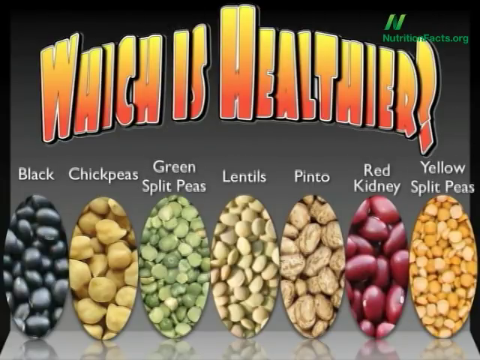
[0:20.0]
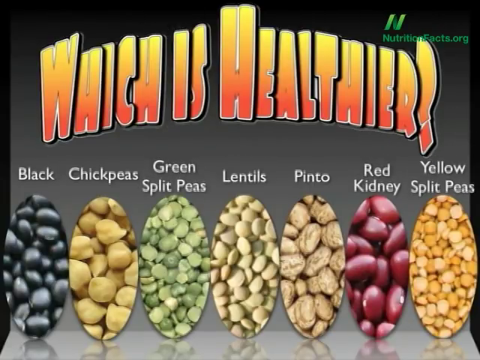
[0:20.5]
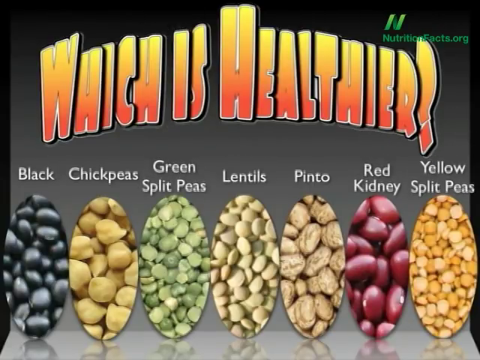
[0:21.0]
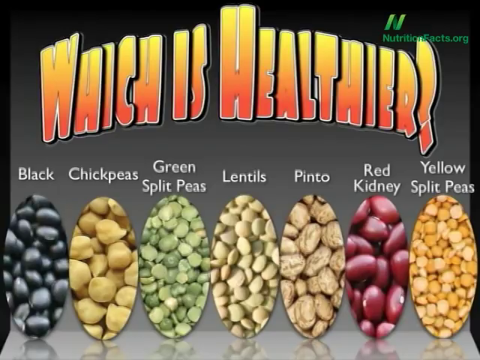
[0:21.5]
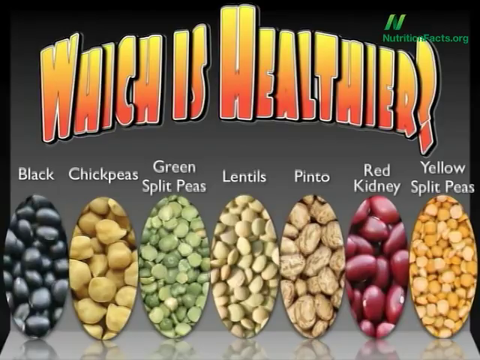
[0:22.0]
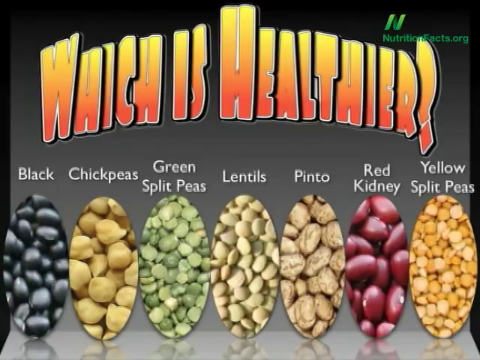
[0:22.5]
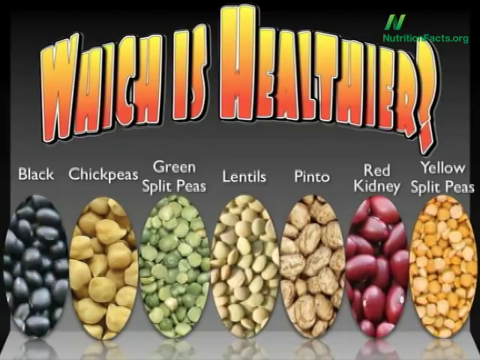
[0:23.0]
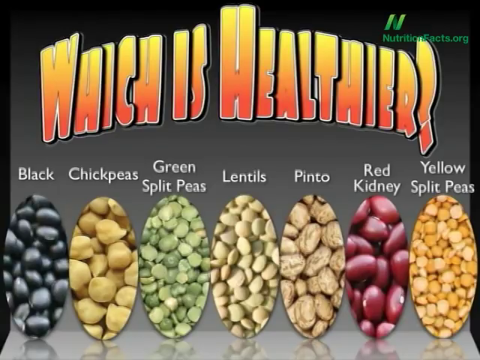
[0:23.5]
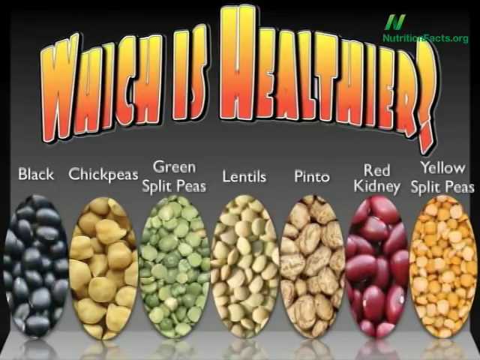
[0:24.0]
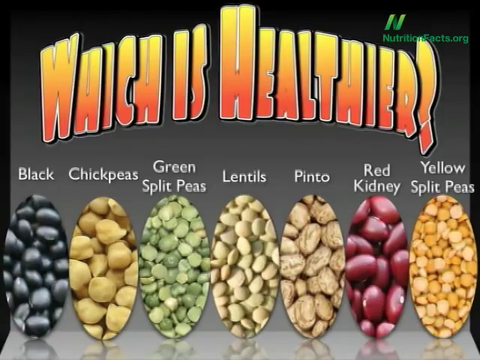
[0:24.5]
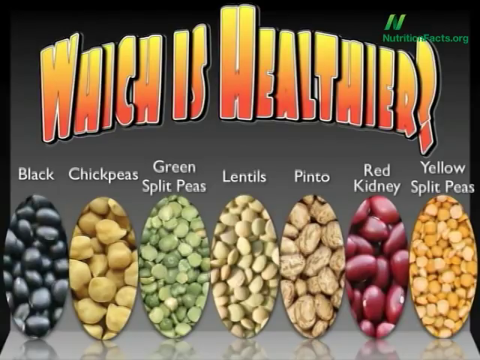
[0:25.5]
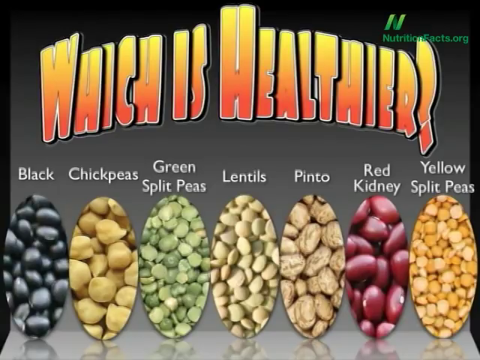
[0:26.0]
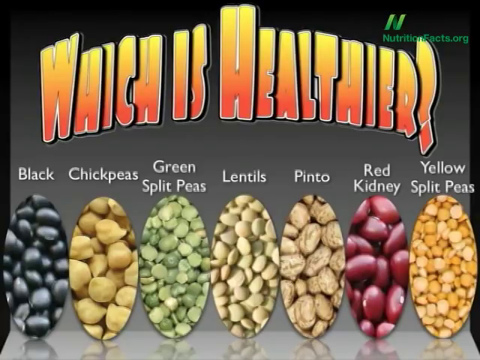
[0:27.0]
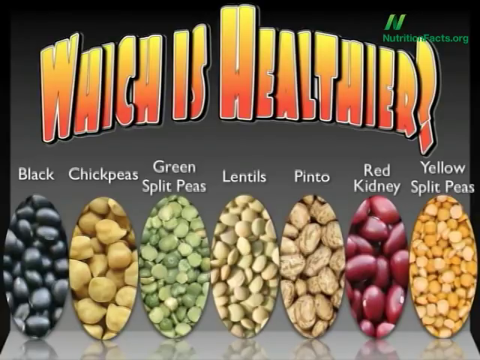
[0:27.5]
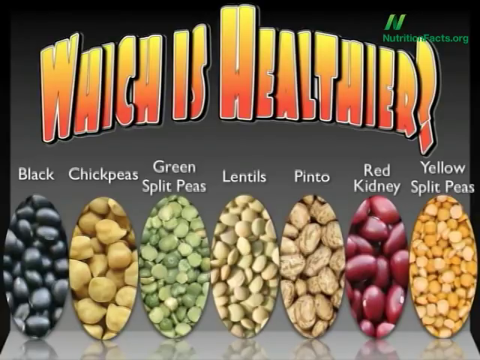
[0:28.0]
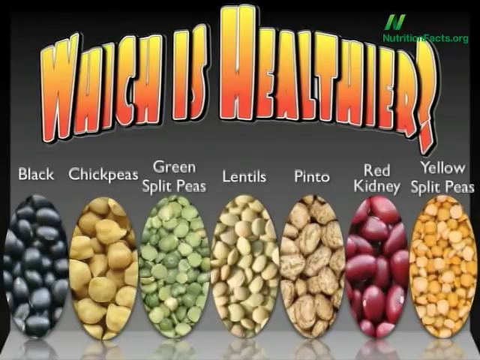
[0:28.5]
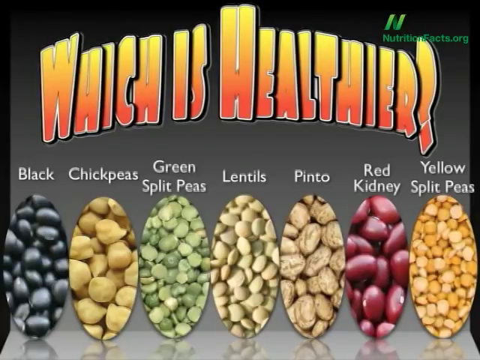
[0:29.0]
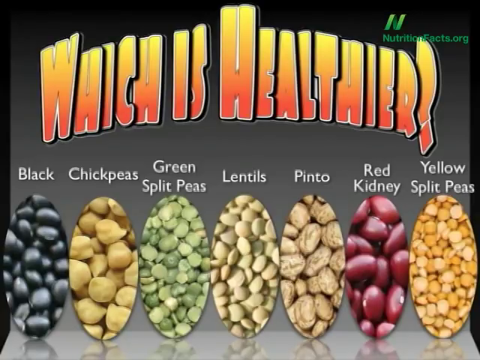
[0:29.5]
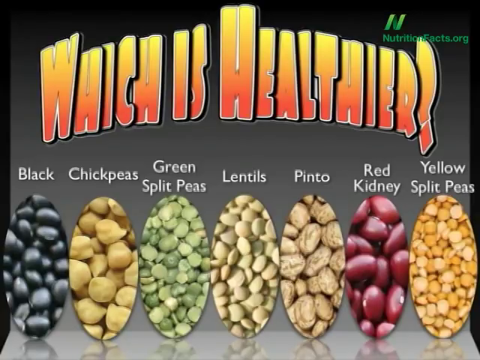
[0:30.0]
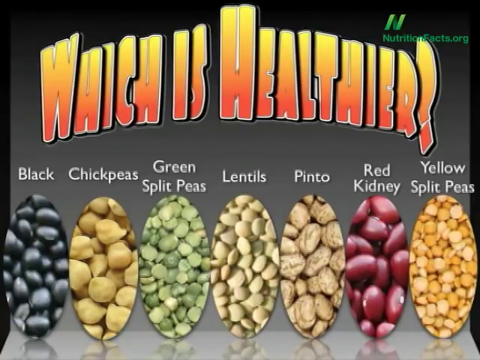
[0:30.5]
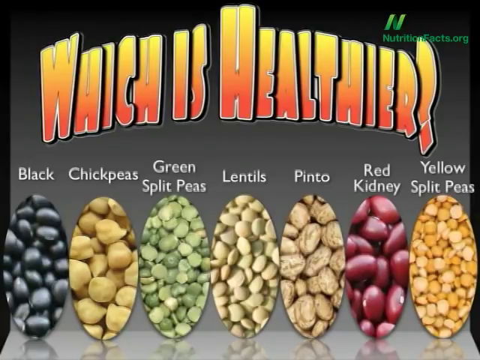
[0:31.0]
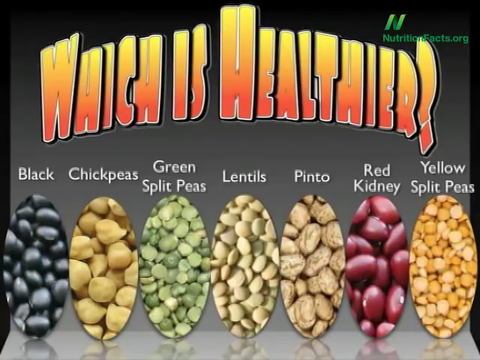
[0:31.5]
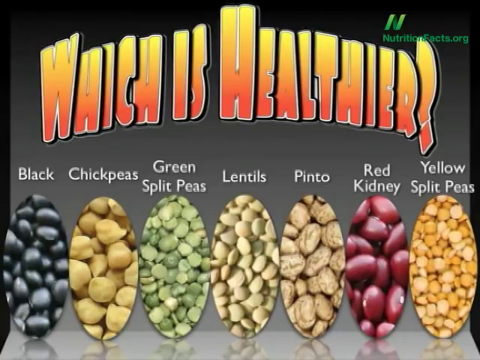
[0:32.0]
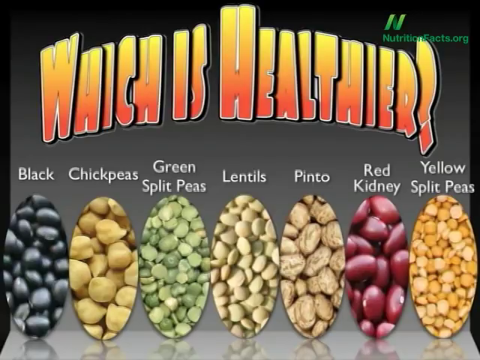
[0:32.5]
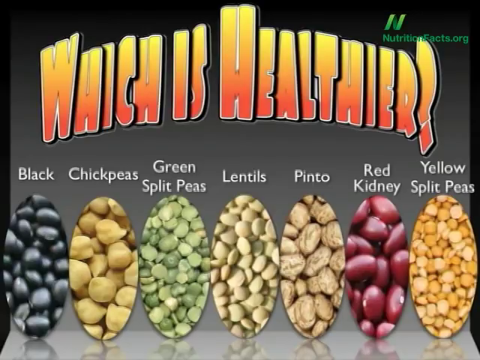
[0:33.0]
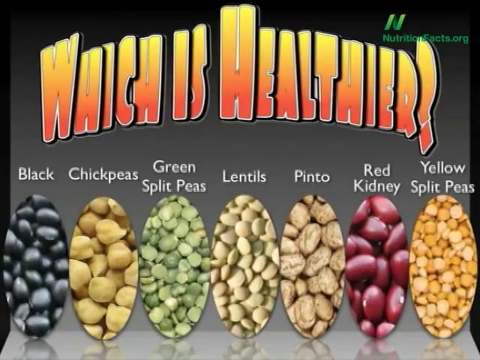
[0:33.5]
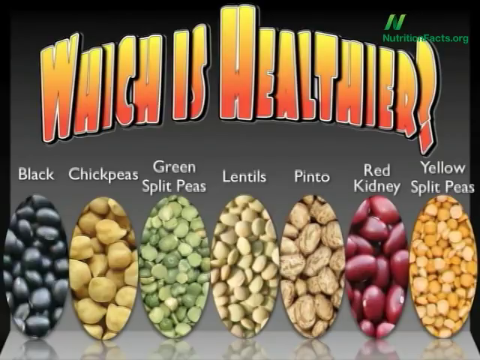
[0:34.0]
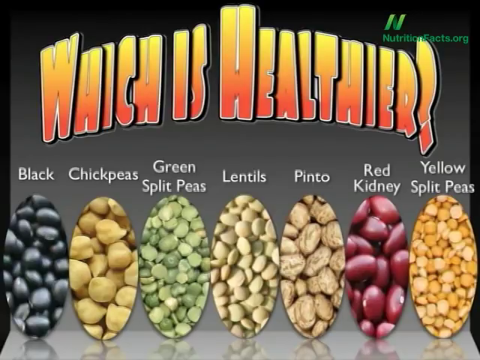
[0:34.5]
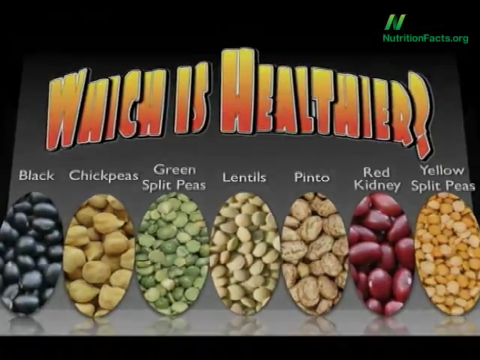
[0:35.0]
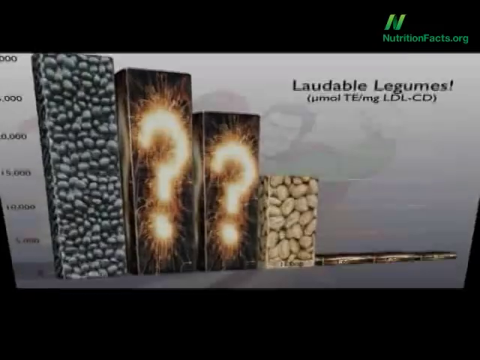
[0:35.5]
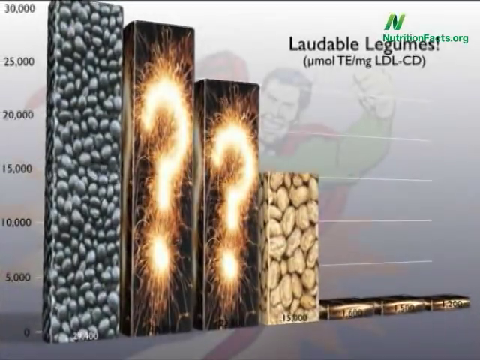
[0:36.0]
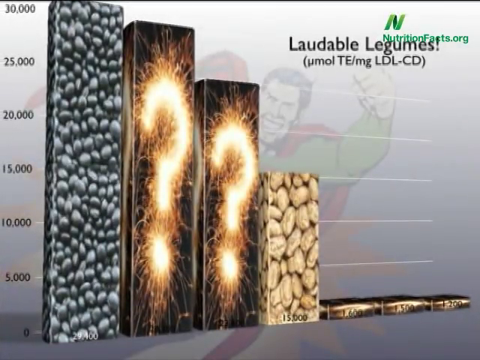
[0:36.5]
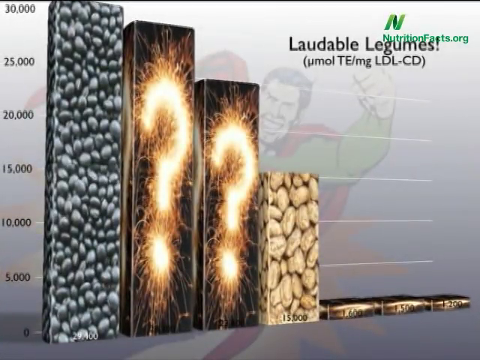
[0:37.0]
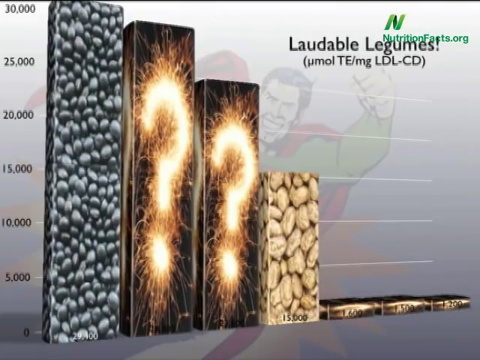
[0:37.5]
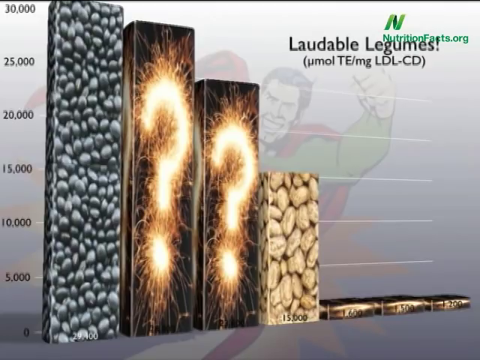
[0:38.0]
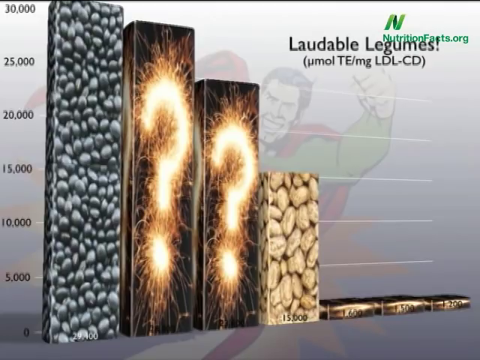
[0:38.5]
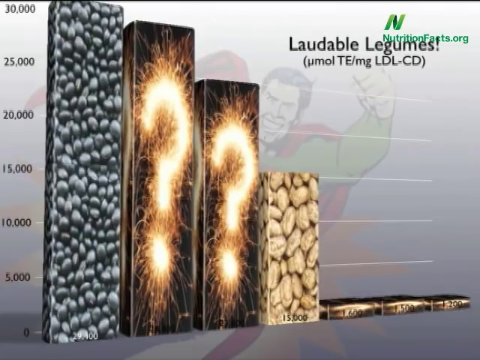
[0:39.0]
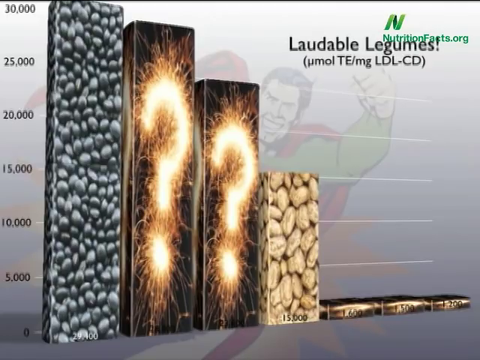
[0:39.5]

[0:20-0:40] The screen with the text "which is healthier" shows what looks like seven different types of beans, from left to right: black, chickpeas, green split peas, lentils, pinto, red kidney and yellow split peas. The screen stays static for some time with nothing in particular happening. The video then cuts to a chart with the text "Laudable Legumes" in the top right corner, just below the nutritionfacts.org logo. The chart has seven bars, and the y-axis is marked in steps of 5,000. Each bar apparently represents one type of bean from the list, with black on the left and yellow split peas on the extreme right. The first four bean types have the highest values, while the last three are below 5,000.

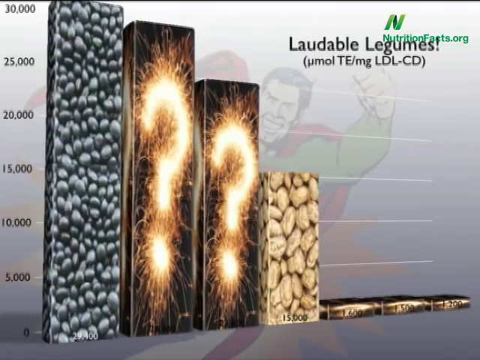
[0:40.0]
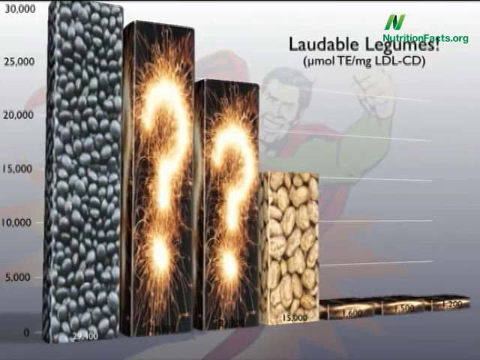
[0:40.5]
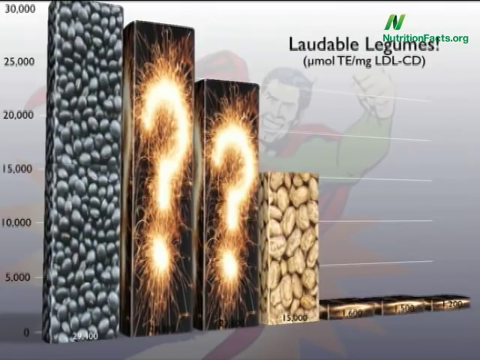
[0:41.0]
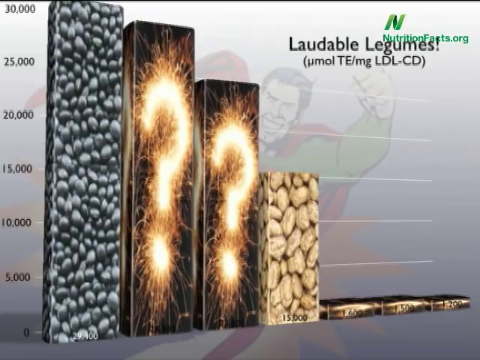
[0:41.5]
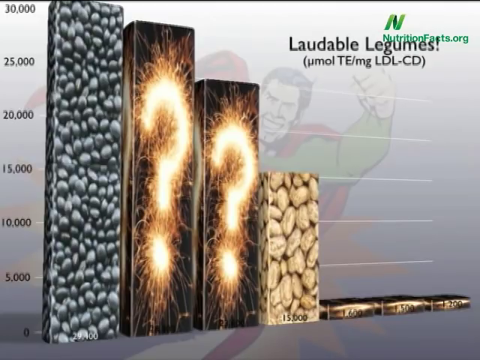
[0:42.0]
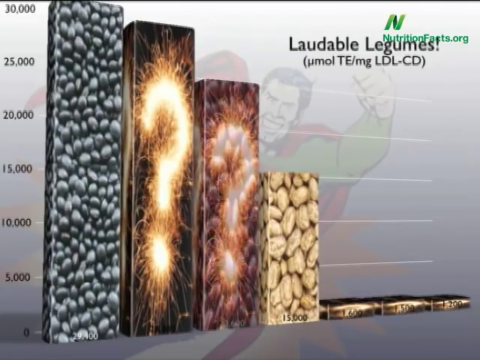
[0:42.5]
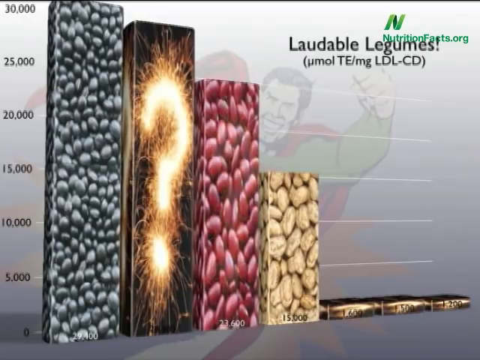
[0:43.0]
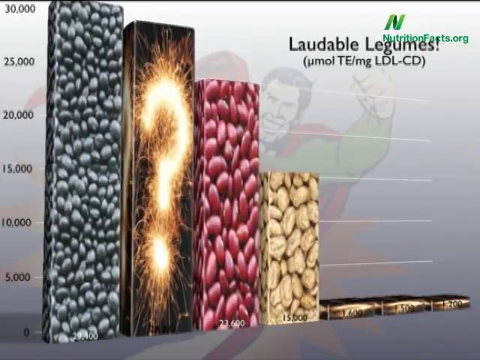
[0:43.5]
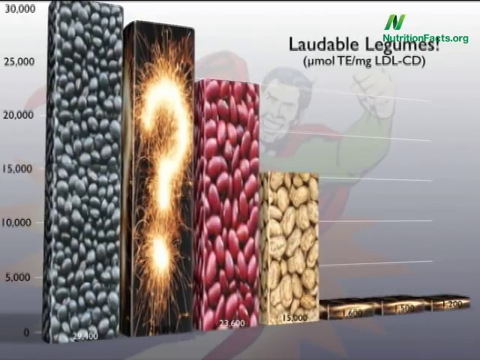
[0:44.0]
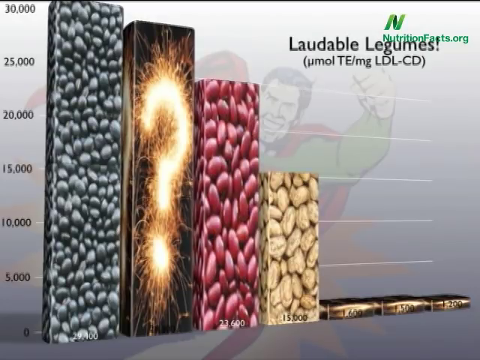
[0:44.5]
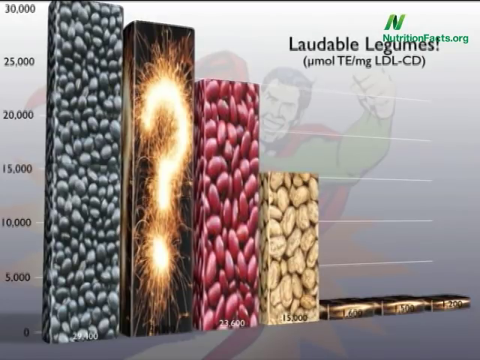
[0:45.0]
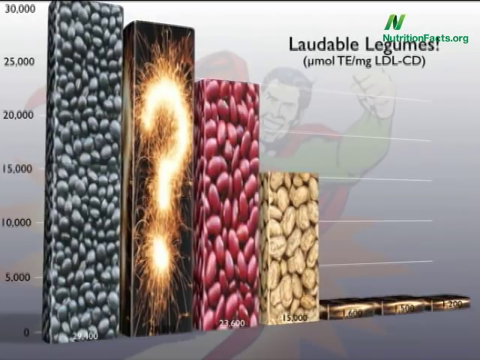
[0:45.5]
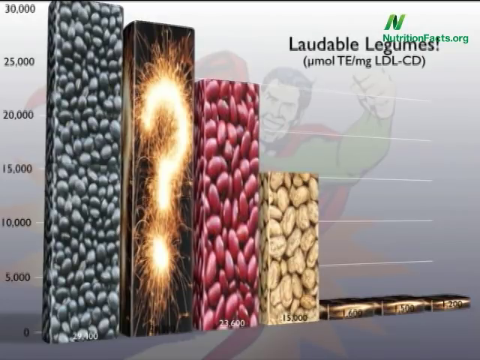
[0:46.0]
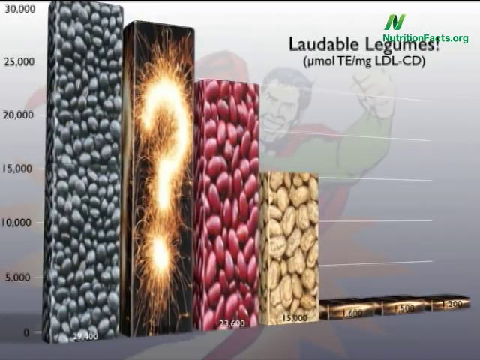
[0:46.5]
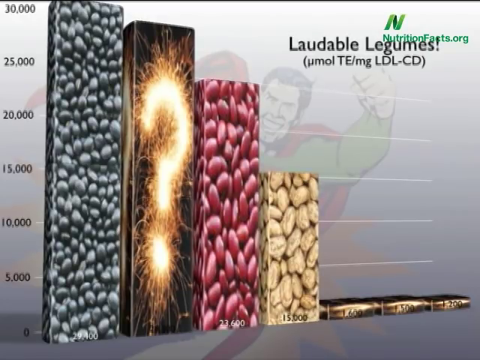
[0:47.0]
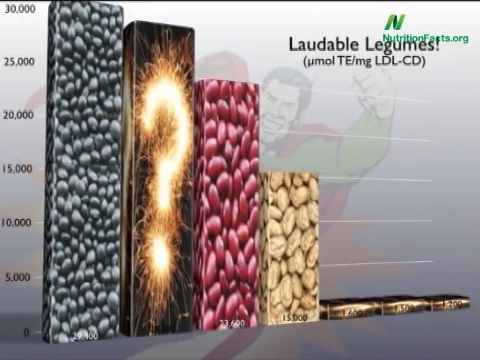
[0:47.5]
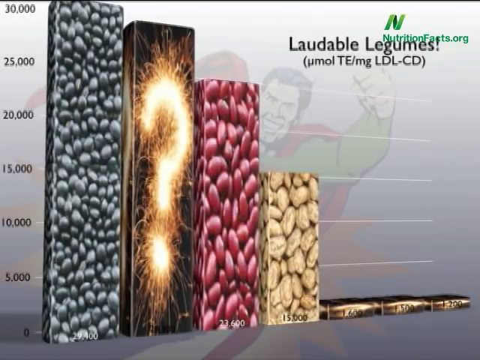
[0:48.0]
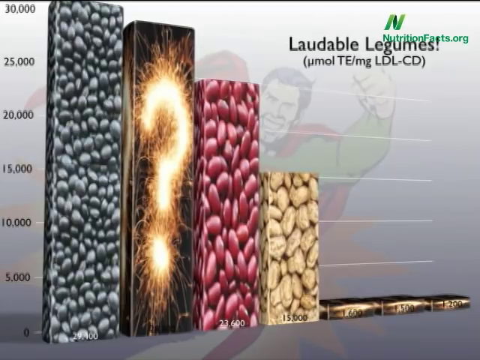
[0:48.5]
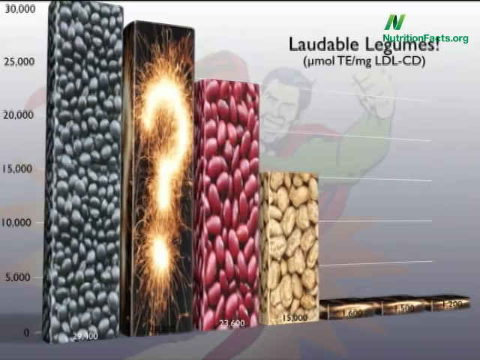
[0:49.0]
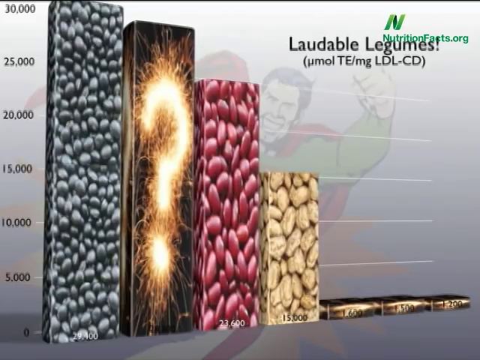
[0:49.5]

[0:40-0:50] A chart with the text "Laudable Legumes" is shown, with the NutritionFacts.org logo at the top right of the screen. The chart shows what looks like different types of beans, each with a bar, and the y-axis is marked in steps of 5,000. The leftmost bean type is over 30,000, the second about 28,000, the third about 24,000 and the fourth about 15,000, as read from the y-axis values, while the last three are below 5,000. The picture of the third type of bean is animated to show a purplish-pink bean, then returns to its original look.